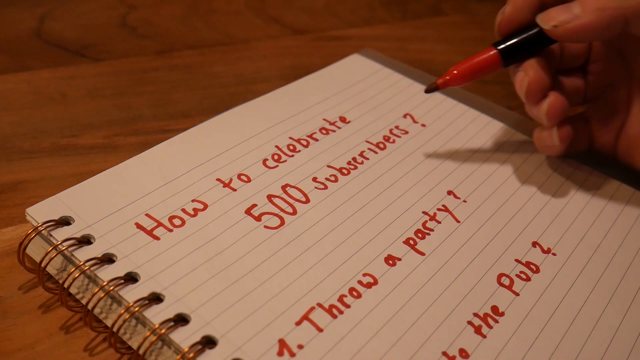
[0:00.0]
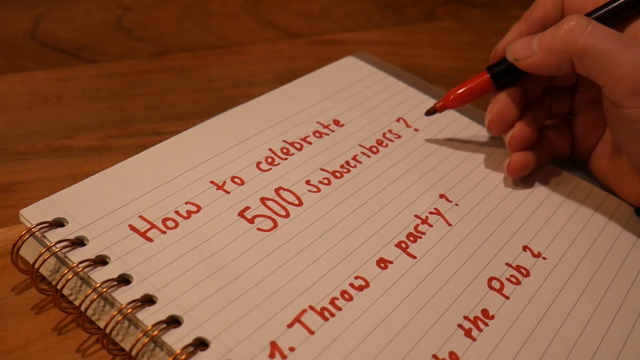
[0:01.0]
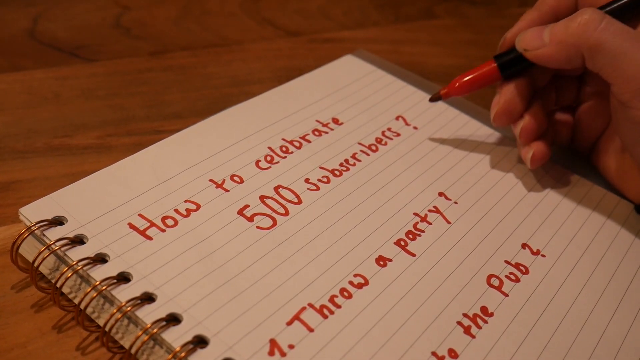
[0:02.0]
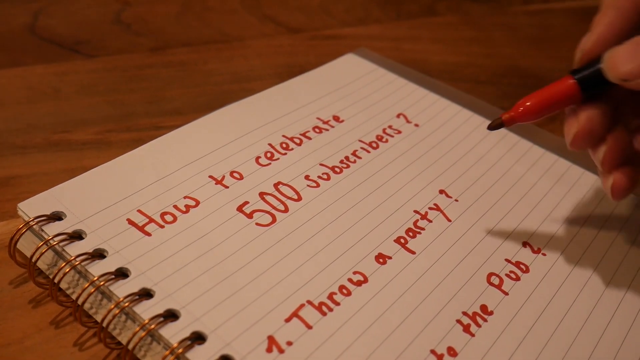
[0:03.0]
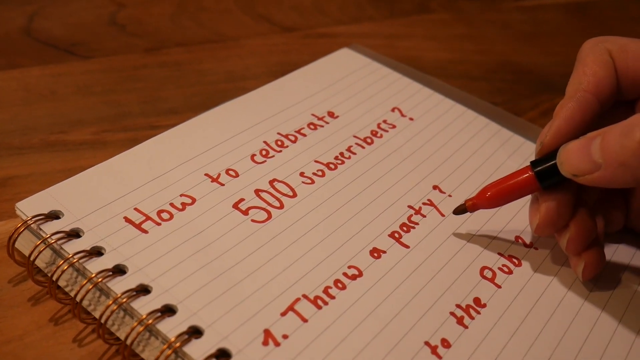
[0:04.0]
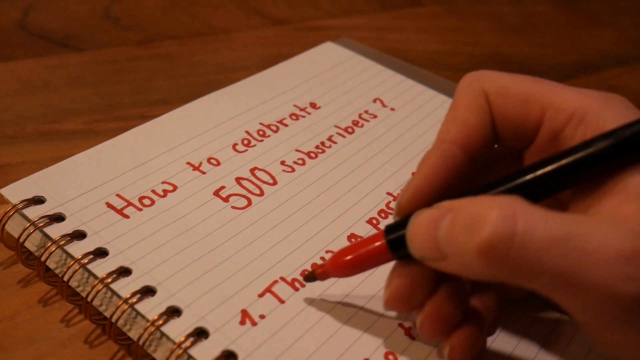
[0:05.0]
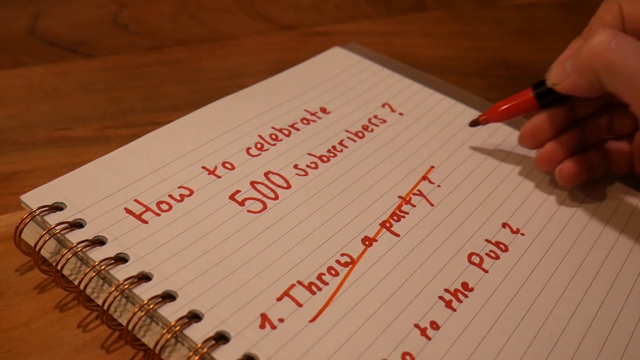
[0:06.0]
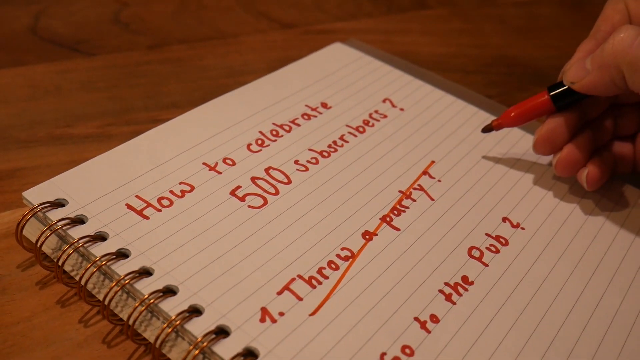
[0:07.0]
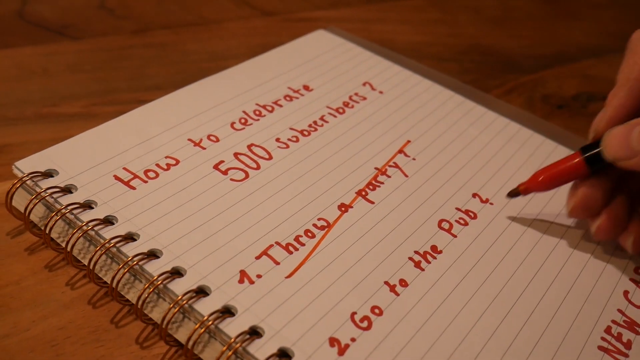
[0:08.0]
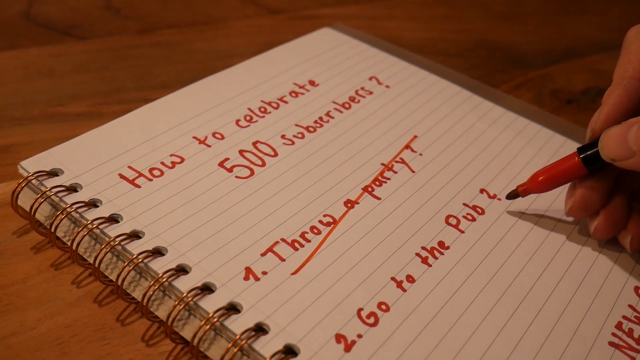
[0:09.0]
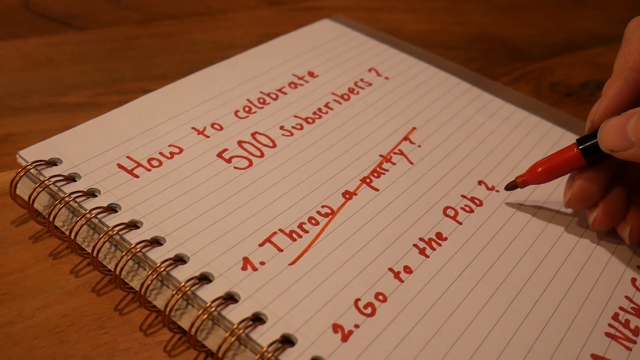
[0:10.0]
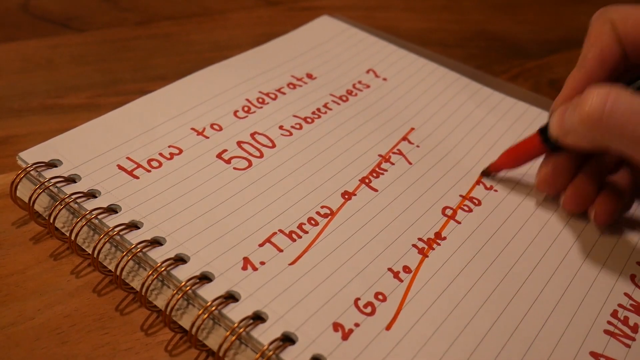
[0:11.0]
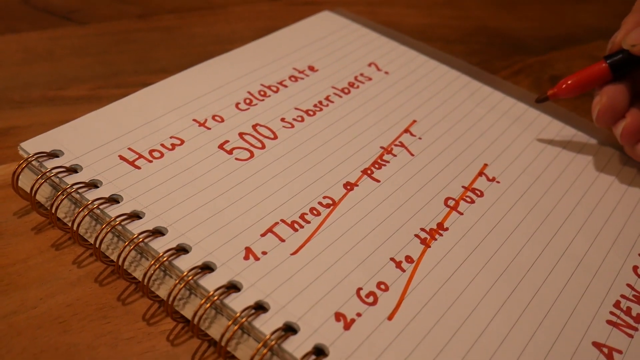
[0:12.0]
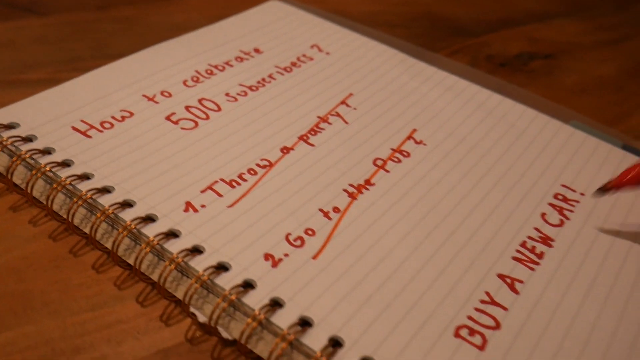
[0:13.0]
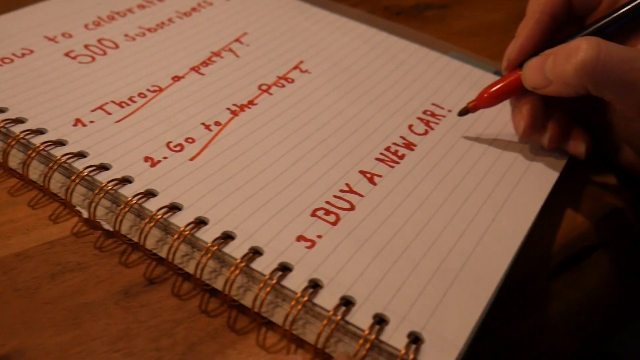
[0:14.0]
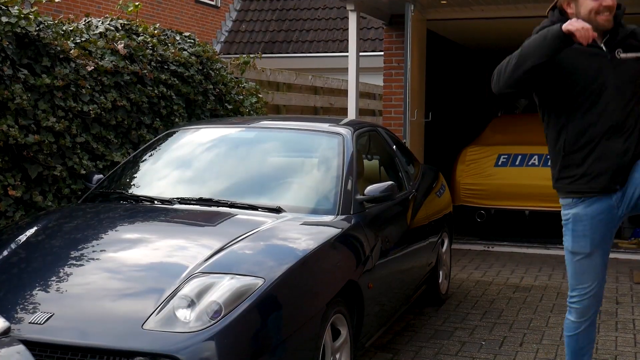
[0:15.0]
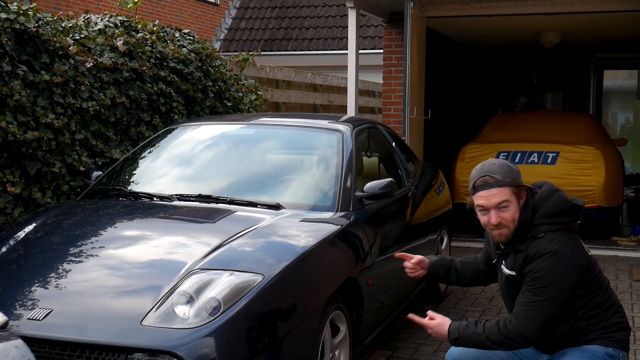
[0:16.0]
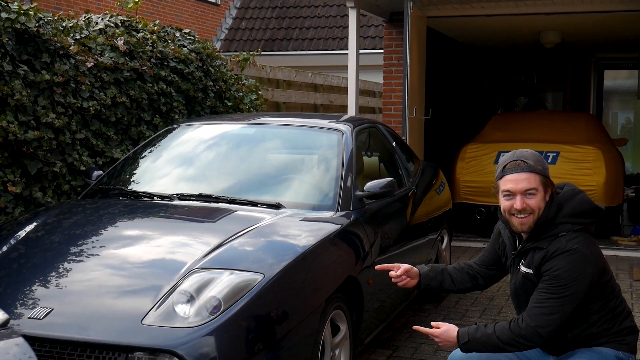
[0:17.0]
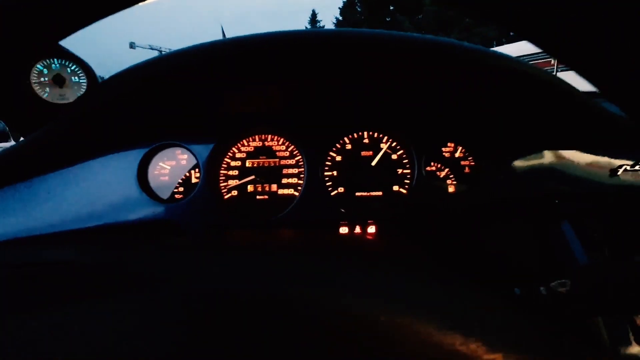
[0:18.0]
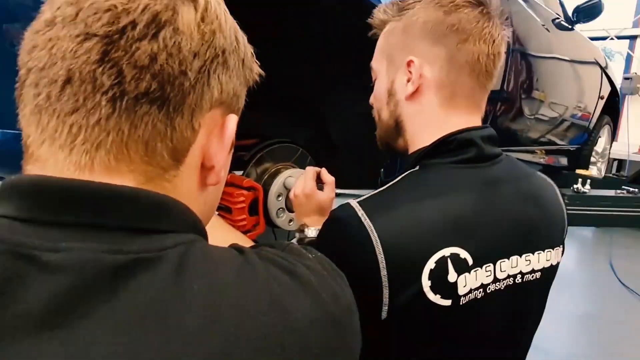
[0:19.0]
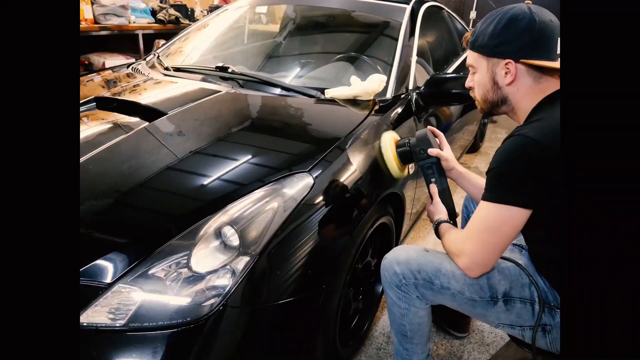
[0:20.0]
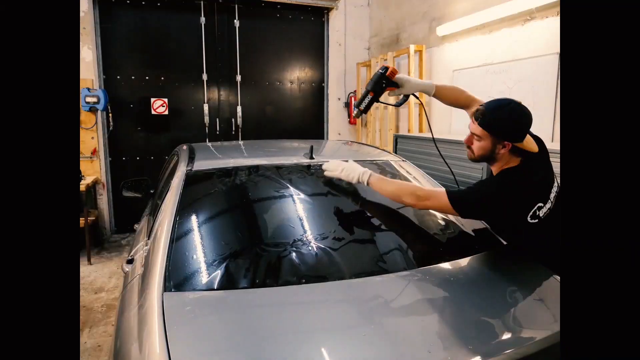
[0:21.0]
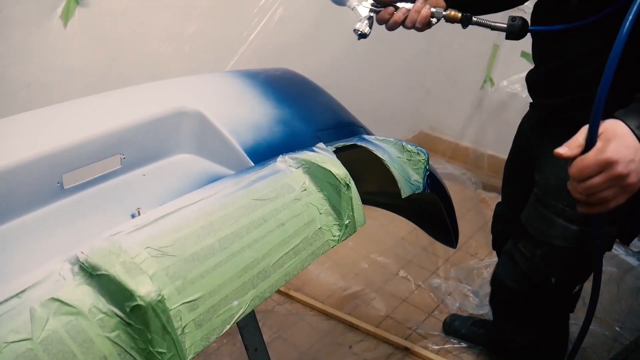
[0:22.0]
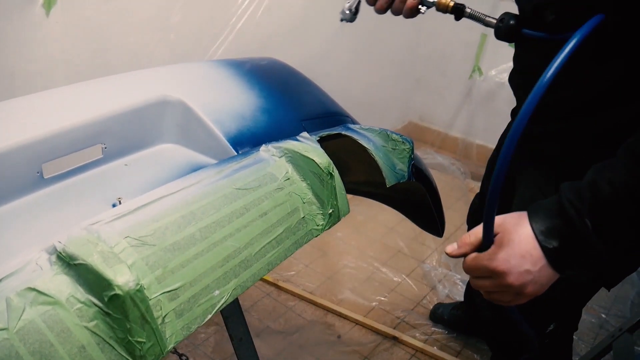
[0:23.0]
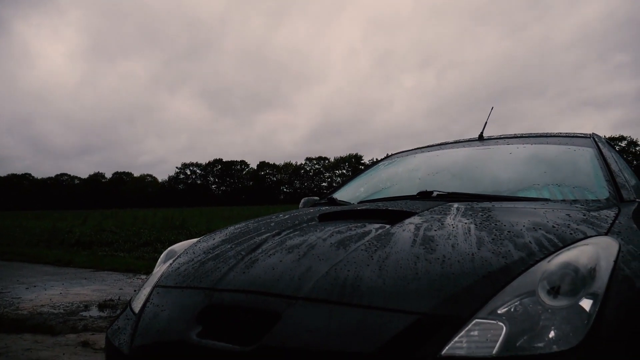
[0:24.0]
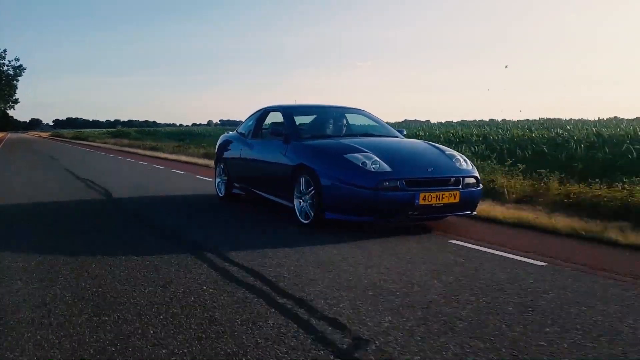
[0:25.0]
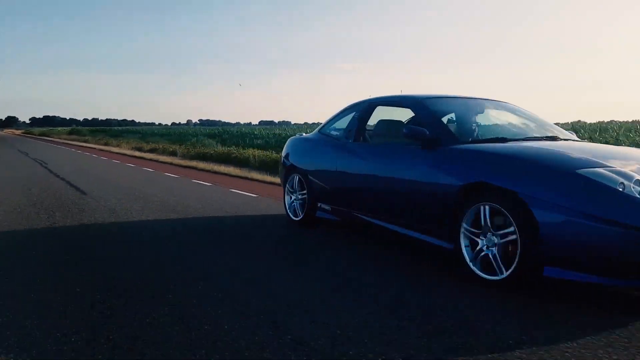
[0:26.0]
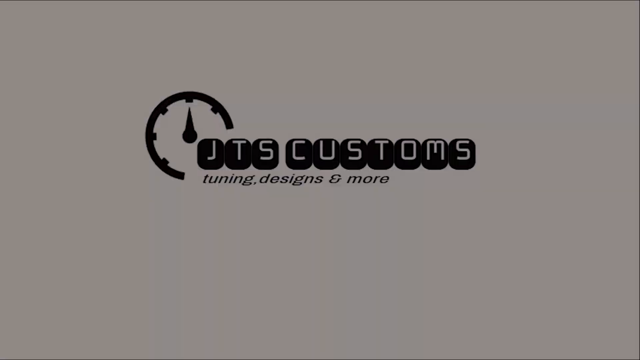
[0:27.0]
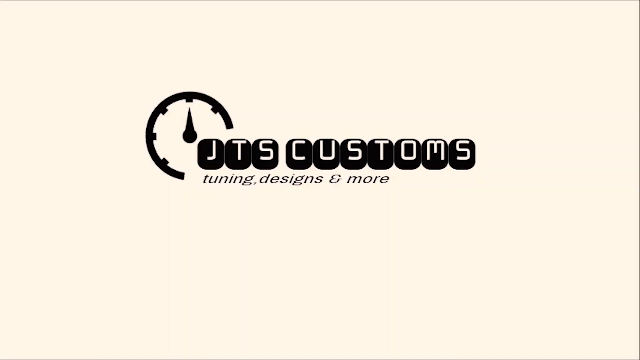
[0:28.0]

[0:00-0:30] Someone writes on a light-colored wooden table in a spiral notebook, and a person's hand is visible; it looks to be male, and it does not look like the fingers are chewed. The pen looks like a red sharpie with a black base. Written out is "how to celebrate 500 subscribers?", then about four lines down it says "throw a party?". About four more lines down, partly cut off, it says something like "or go to the pub". A line is crossed through "throw a party", then through number two, "go to the pub", and number three says "buy a new car". The video then cuts to a car with a male celebrating next to it; he looks to be probably in his 30s and wears a hoodie. He gets inside what looks to be a sports car, and then people are shown working on it, adding tint to it.